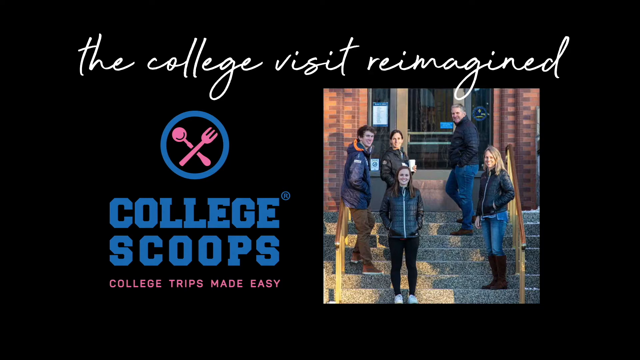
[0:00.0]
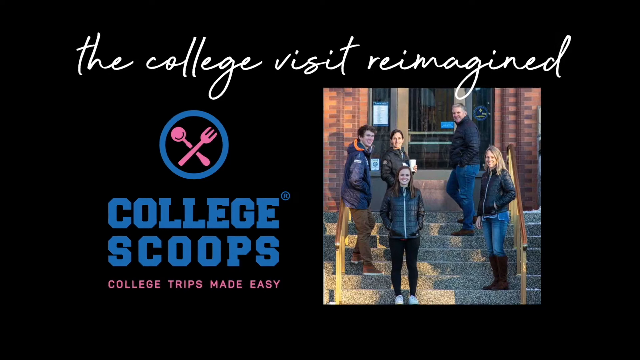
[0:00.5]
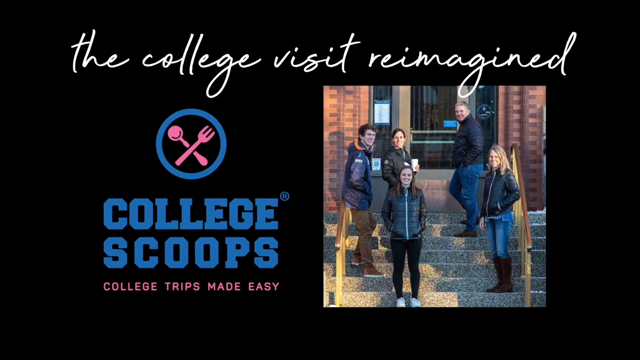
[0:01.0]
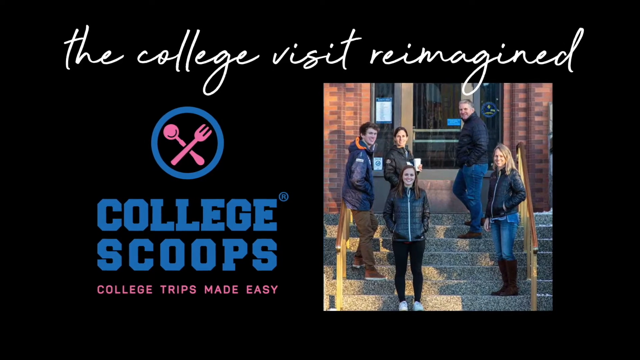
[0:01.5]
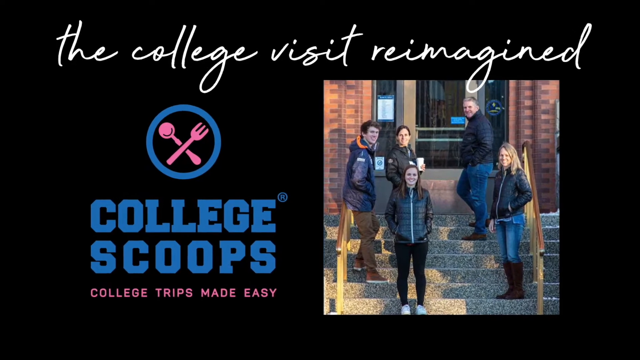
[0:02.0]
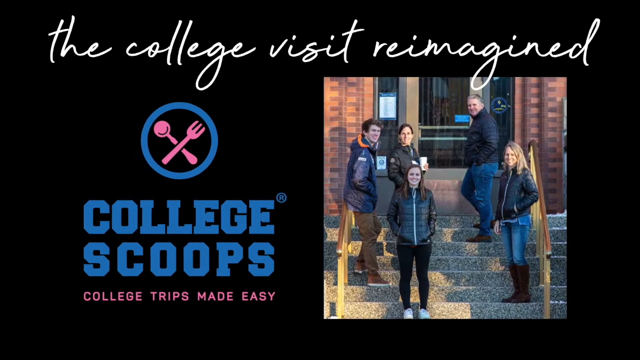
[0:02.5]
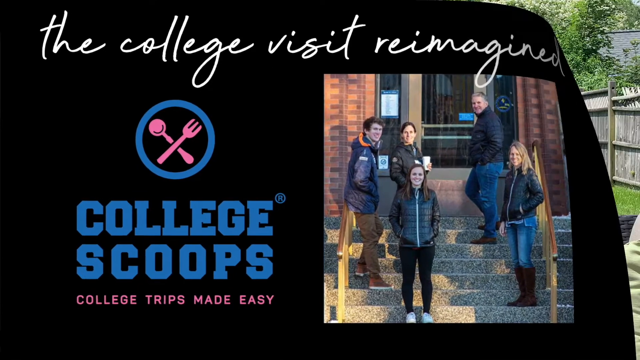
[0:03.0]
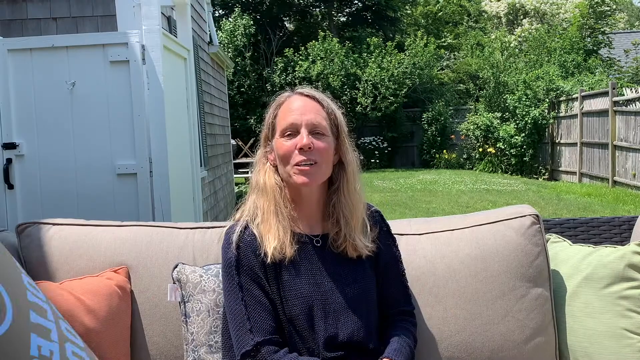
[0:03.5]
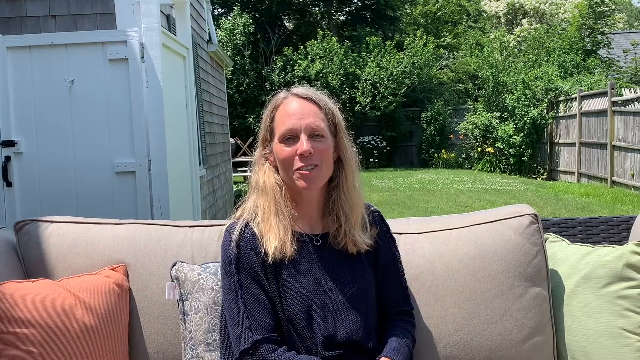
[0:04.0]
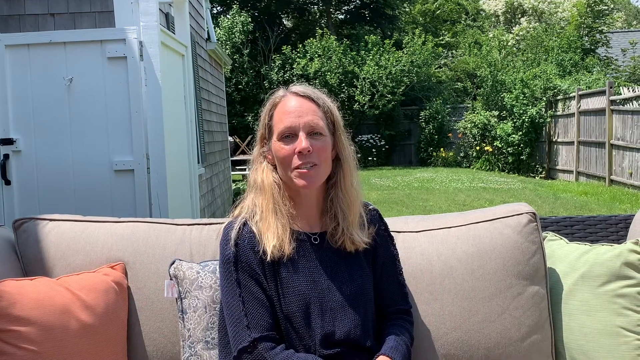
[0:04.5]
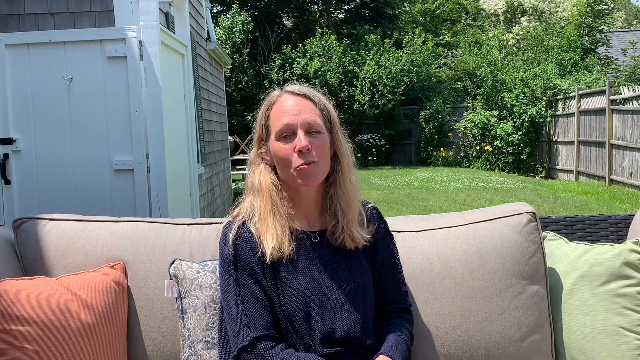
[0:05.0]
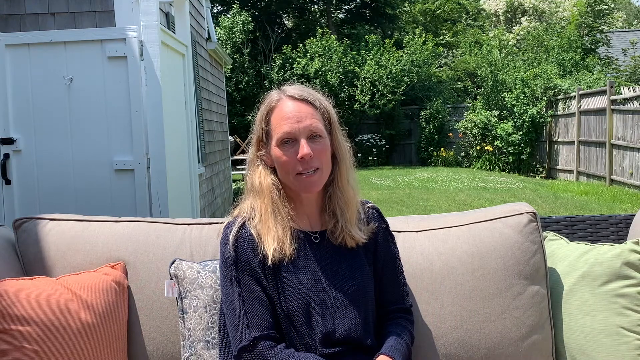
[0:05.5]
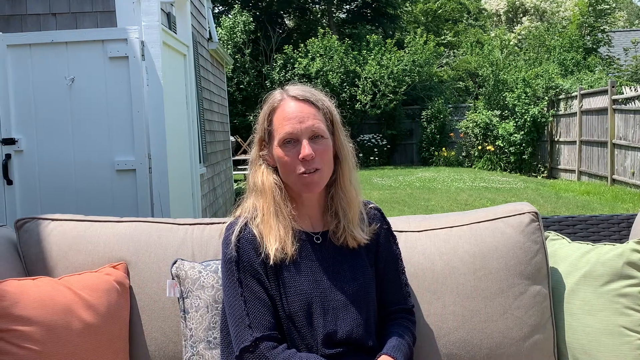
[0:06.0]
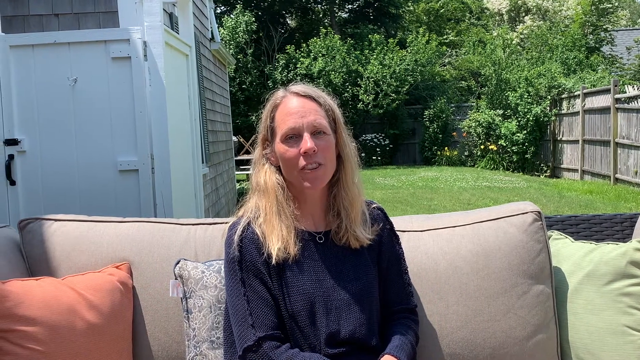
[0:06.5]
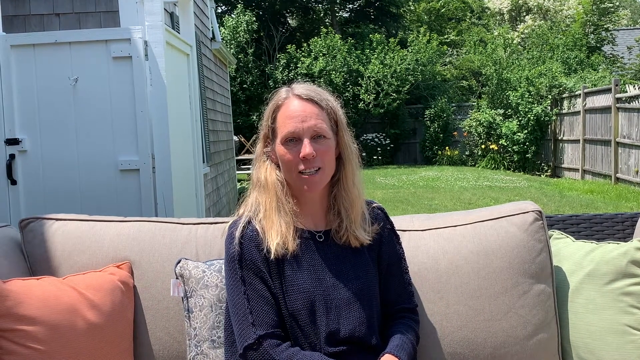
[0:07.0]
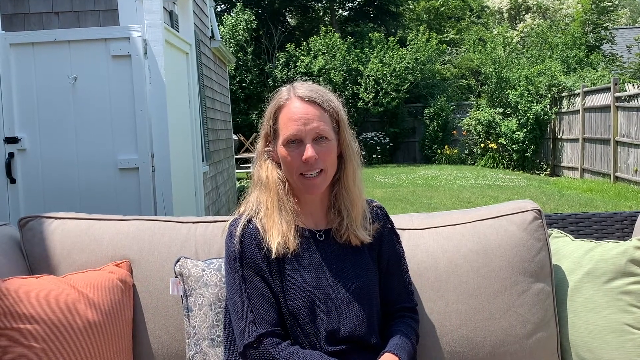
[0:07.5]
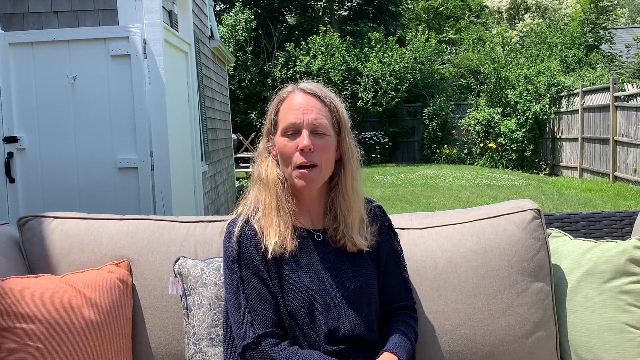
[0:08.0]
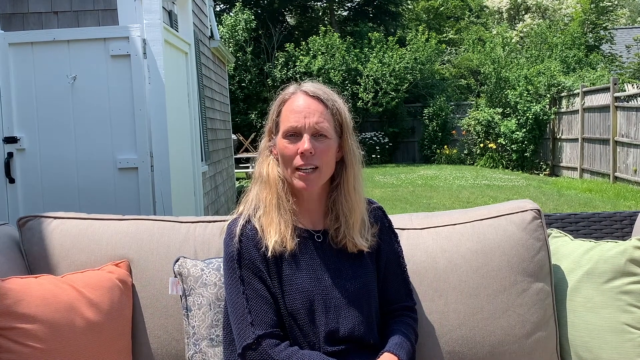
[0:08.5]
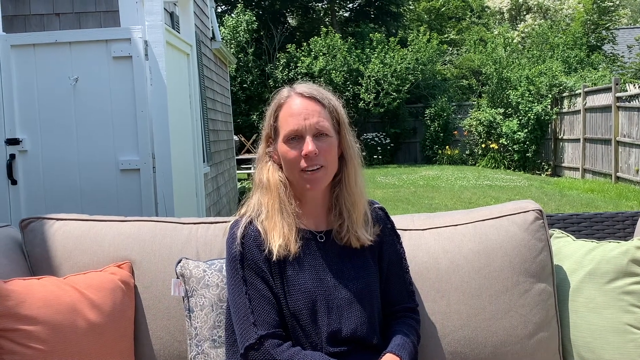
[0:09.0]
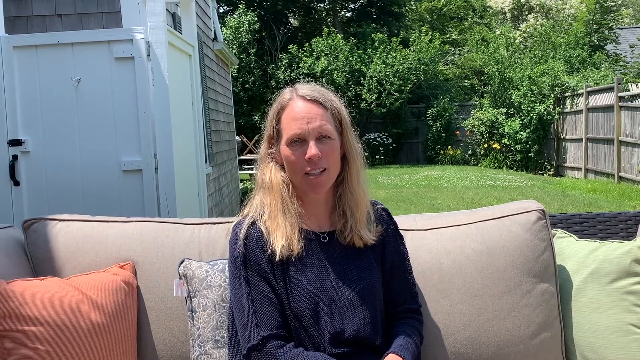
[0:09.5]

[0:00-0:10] The video opens on an intro picture with "the college visit reimagined" written across the top in white cursive letters. On the left it reads "college scoops, college trips made easy." The logo has a spoon and fork at the top, possibly suggesting a connection to food. The video then cuts to a woman sitting outside.